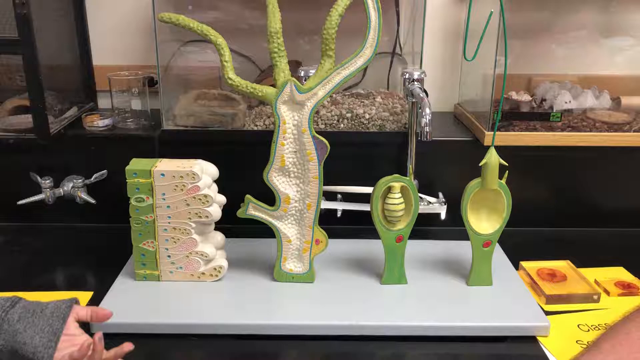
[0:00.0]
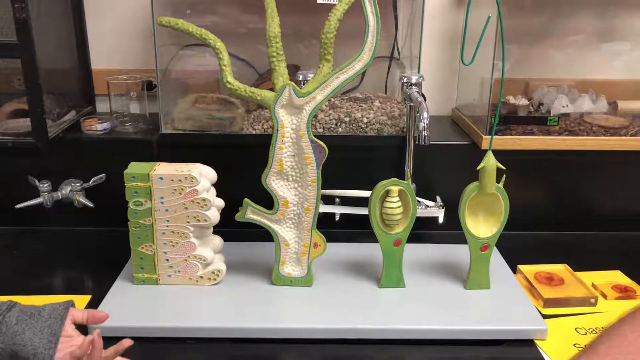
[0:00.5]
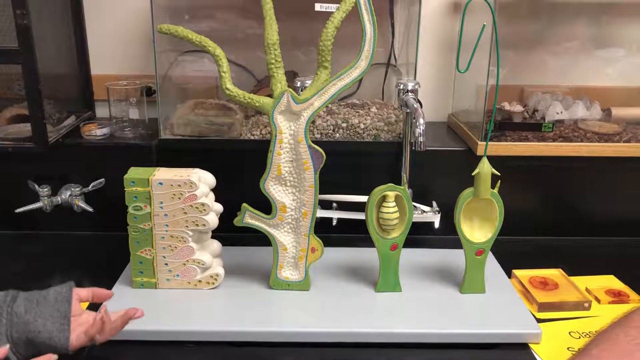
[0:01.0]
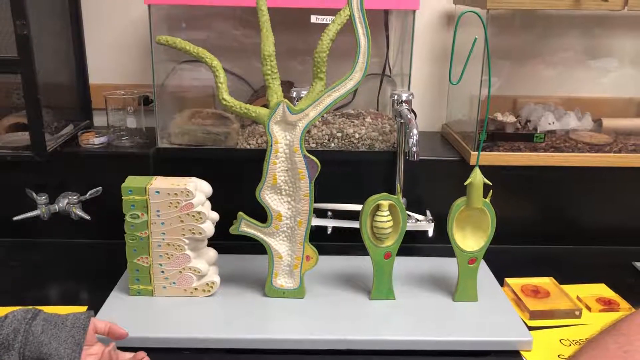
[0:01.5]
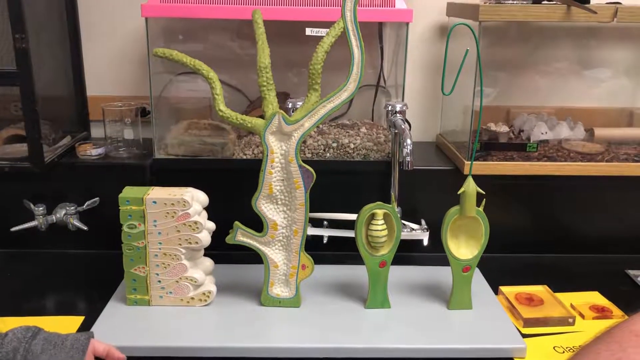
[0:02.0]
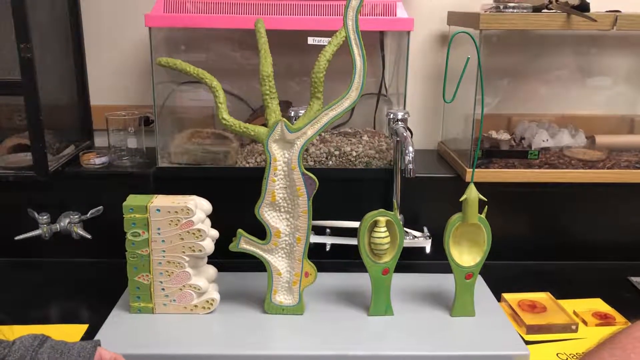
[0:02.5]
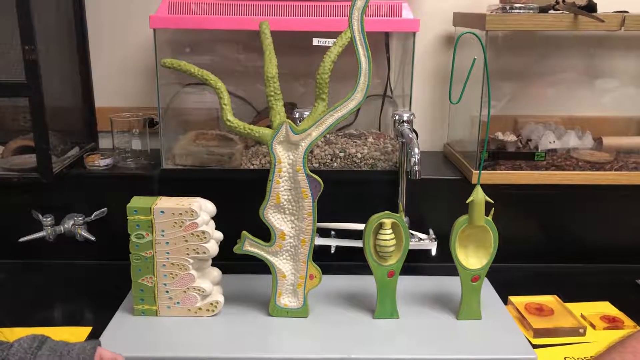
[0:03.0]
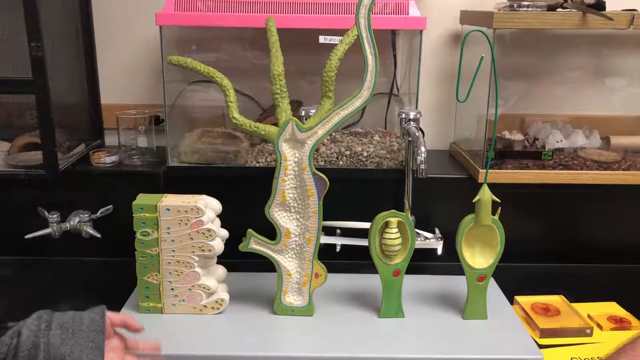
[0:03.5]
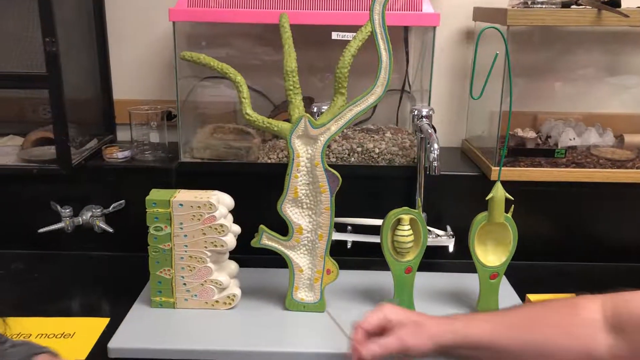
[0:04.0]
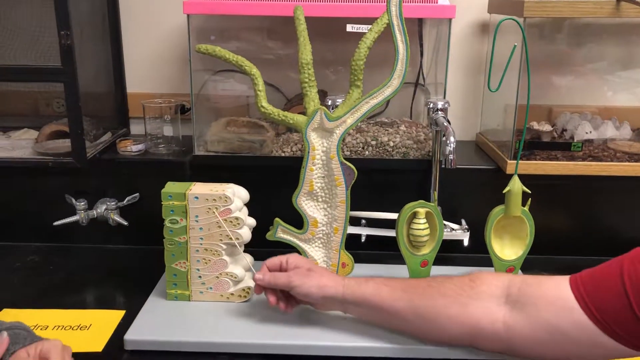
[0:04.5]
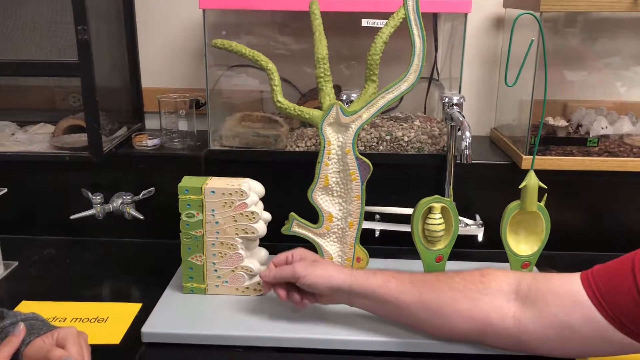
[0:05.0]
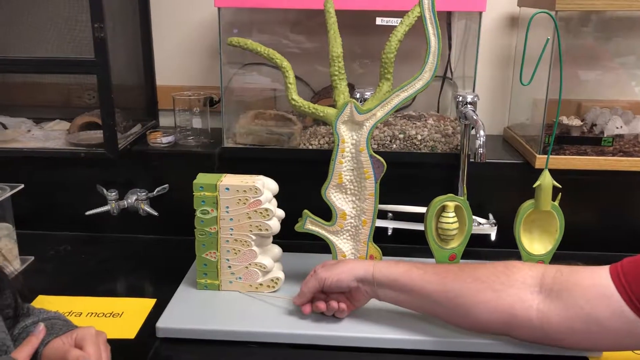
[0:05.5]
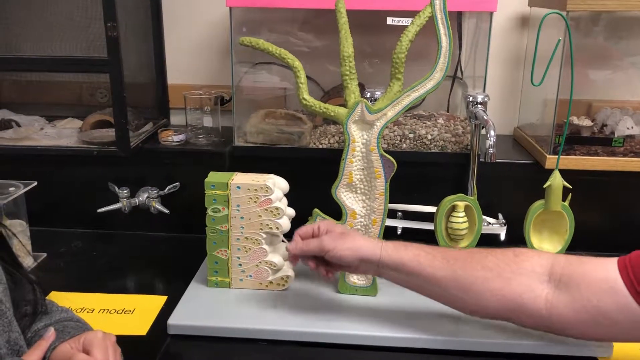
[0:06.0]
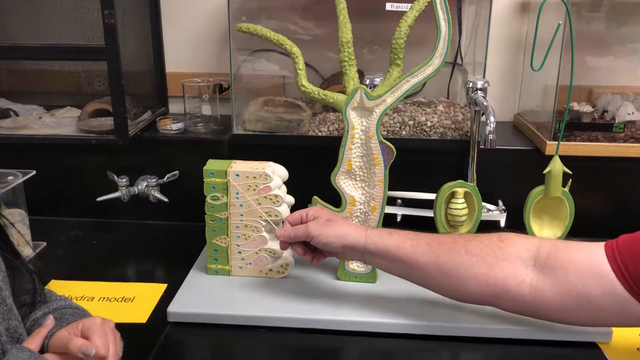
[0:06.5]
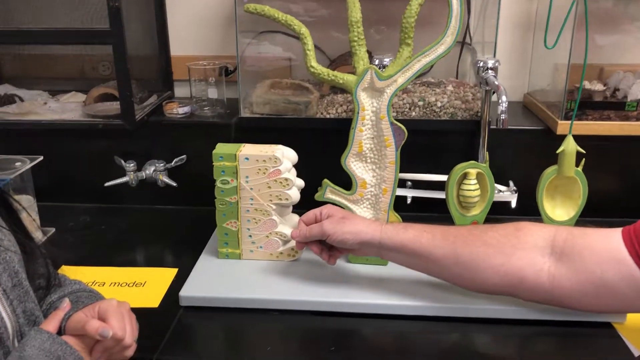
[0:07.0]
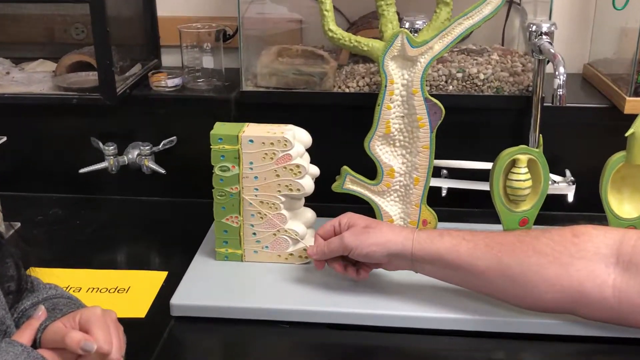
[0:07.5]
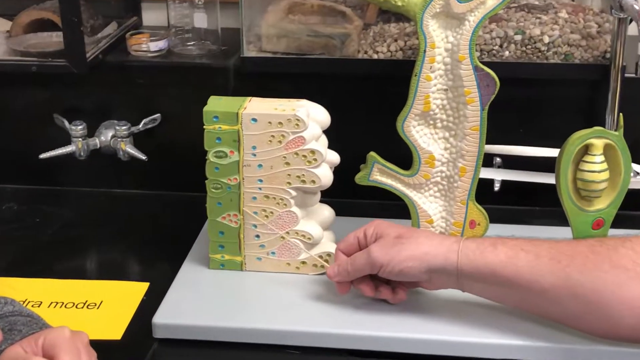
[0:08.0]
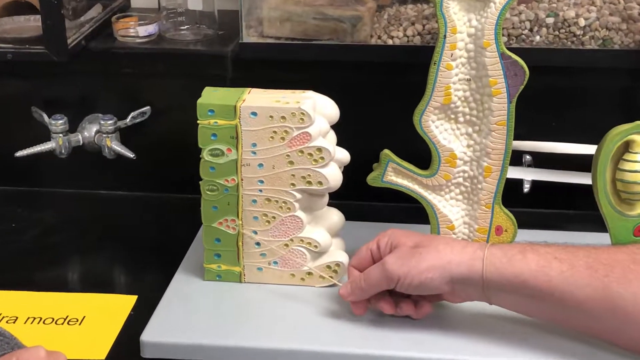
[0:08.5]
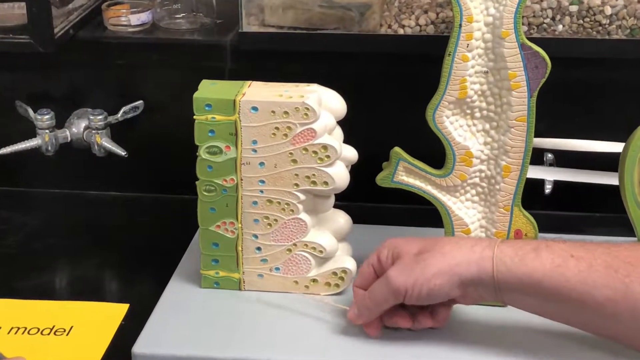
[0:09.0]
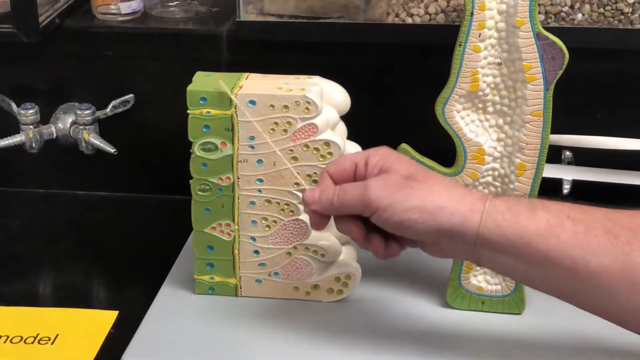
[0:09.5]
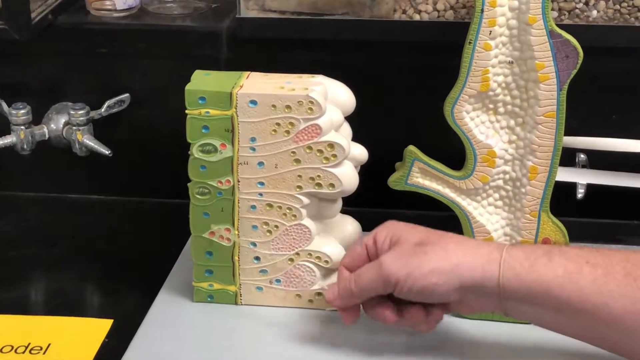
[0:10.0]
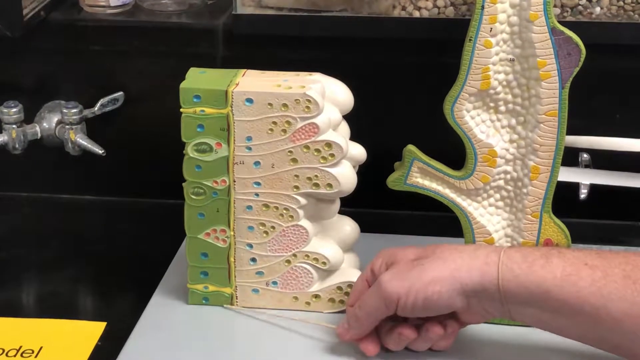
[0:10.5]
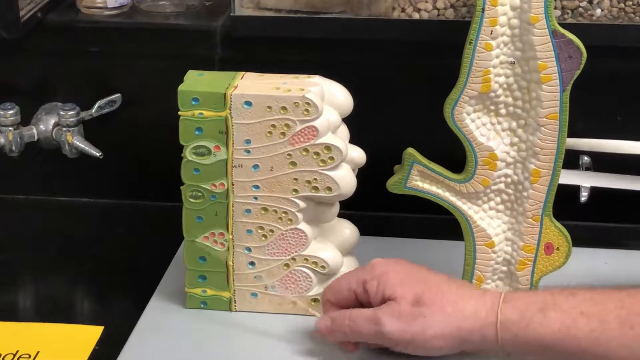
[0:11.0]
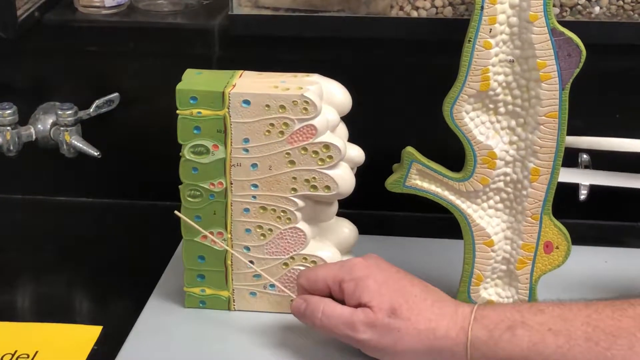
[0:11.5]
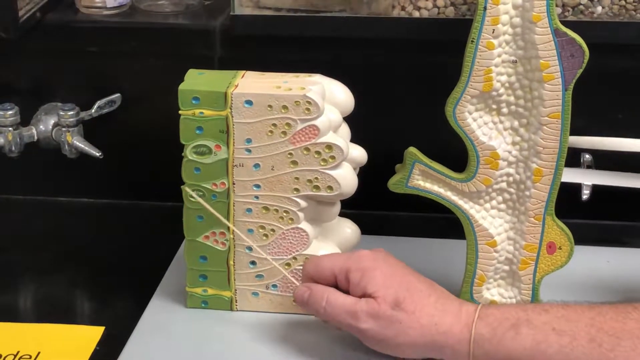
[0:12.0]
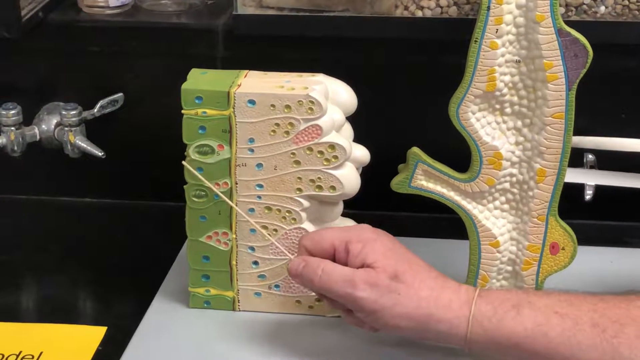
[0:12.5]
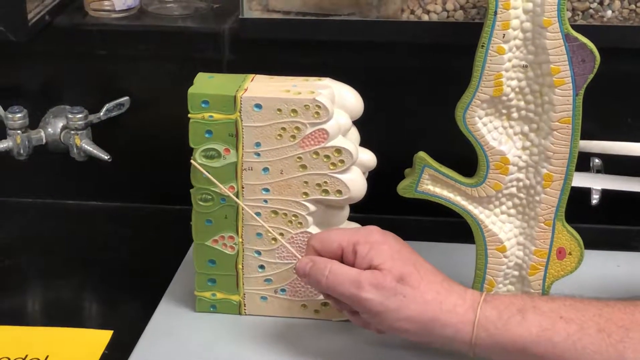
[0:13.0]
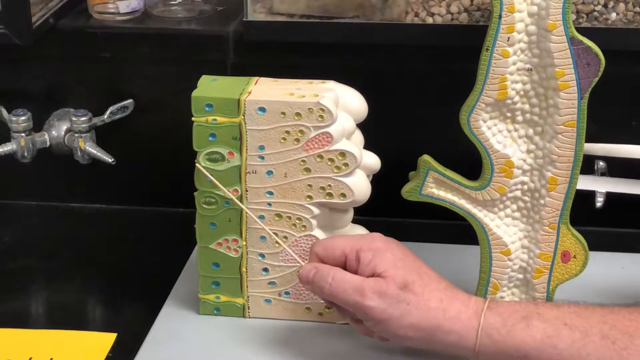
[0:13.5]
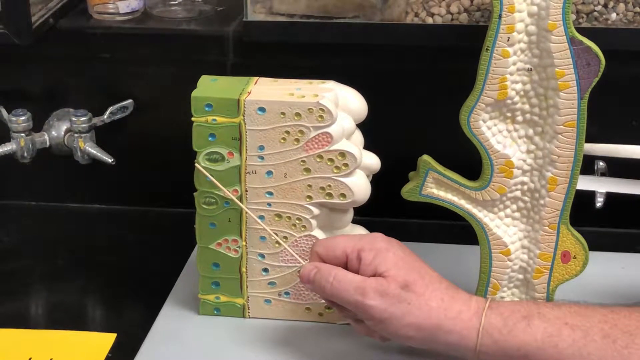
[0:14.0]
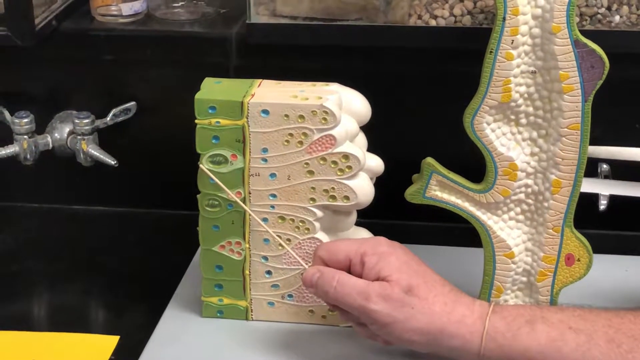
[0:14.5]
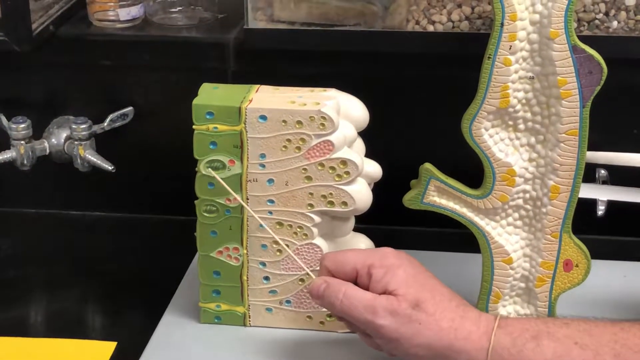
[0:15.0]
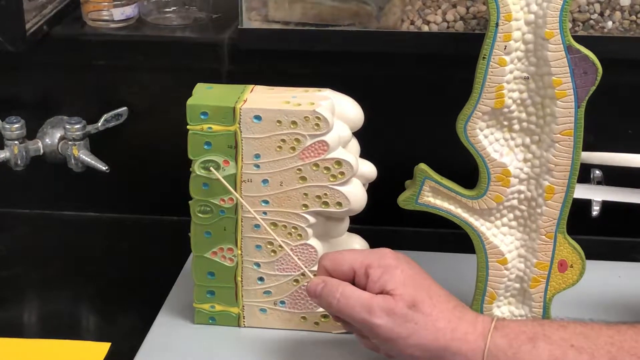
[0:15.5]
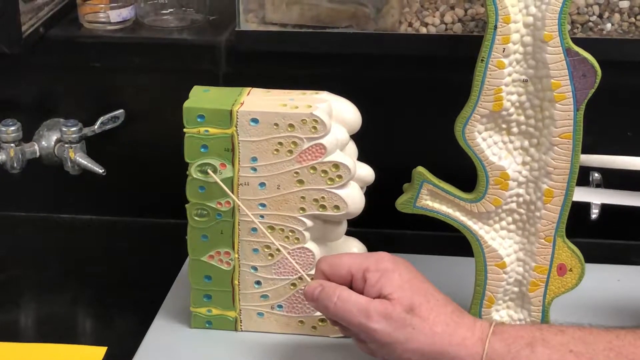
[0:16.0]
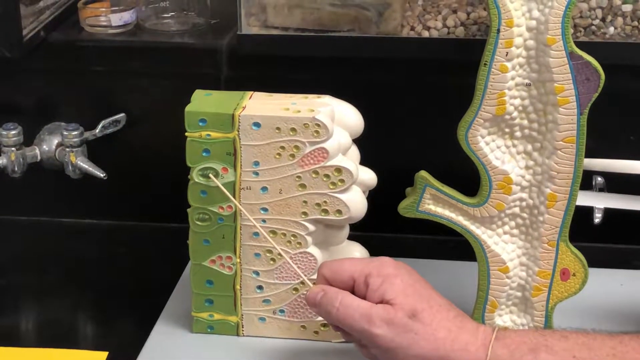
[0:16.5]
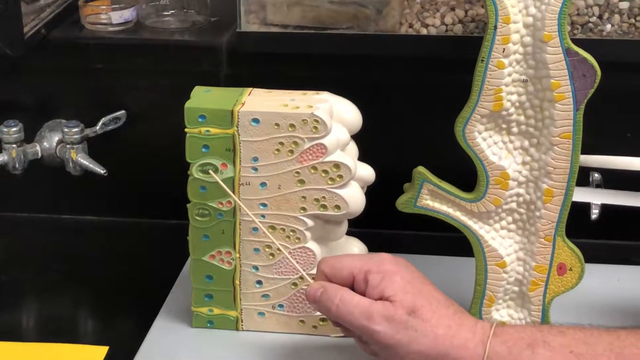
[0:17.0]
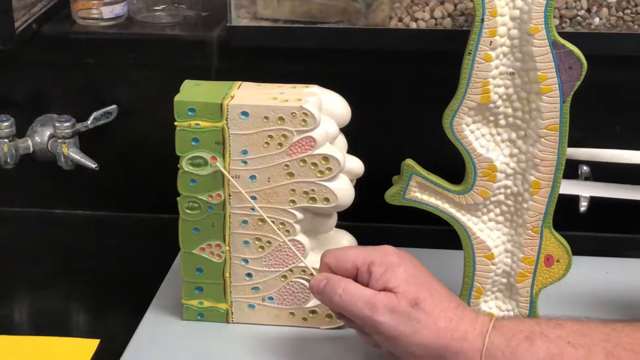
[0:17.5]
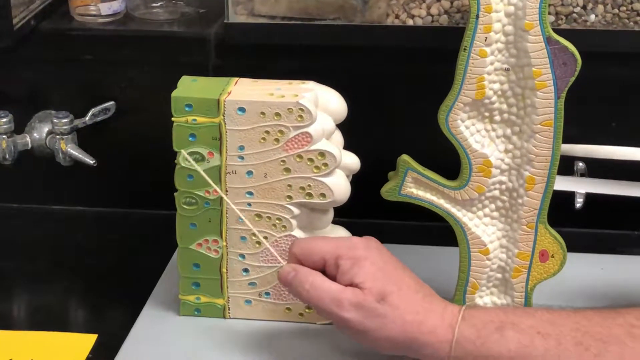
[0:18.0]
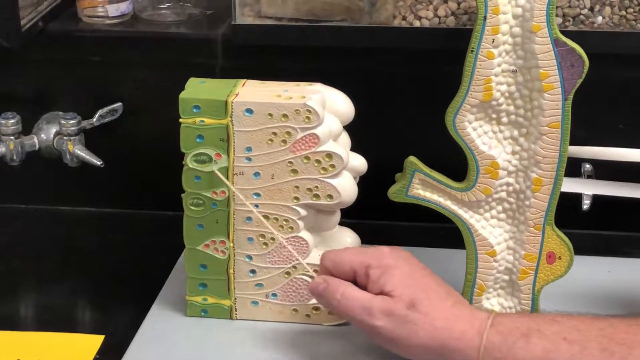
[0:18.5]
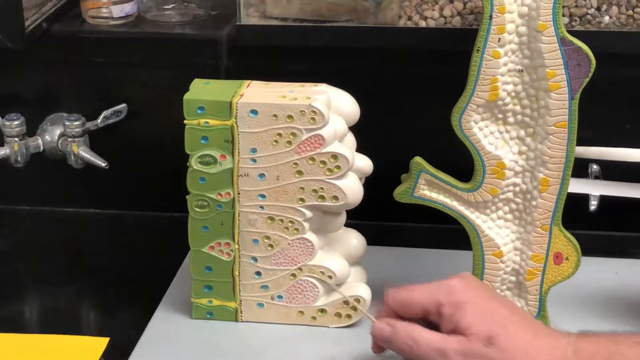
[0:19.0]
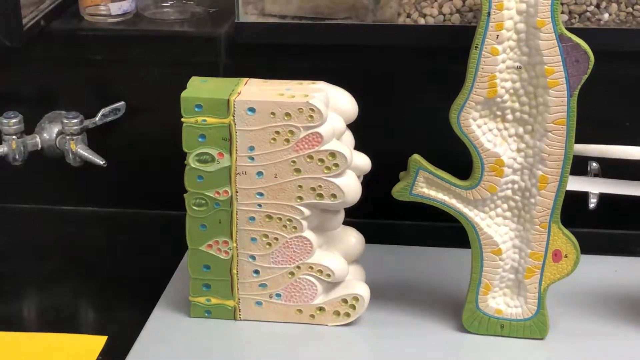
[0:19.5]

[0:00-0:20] A demonstrator shows the various layers of an organism and points out the parts of cells. The plastic models used for the demonstration are mostly green. The first one, on the left, looks like a book shape, with a green spine and some white polyp-like lining; the demonstrators point out the green spine on this first model on the left-hand side of the screen. The second model, to the right, is a long shape with tentacles at the top, and the third and fourth are small green pods with a hollowed-out area inside. Behind these four models are some empty glass tanks that look like they are used to house amphibians as pets. The demonstration appears to be taking place inside a lab classroom, with nozzles coming out of the wall parapet, possibly for attaching a Bunsen burner.